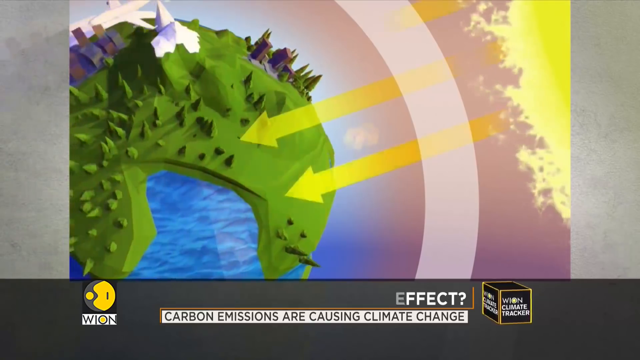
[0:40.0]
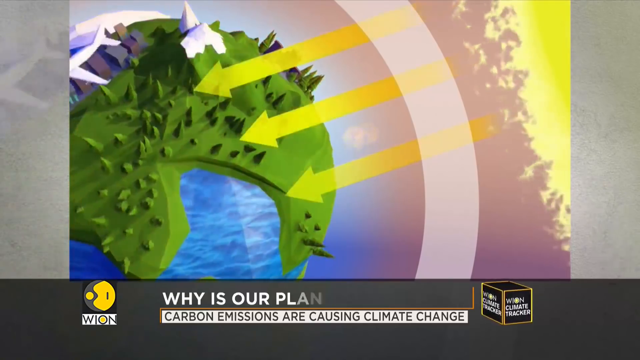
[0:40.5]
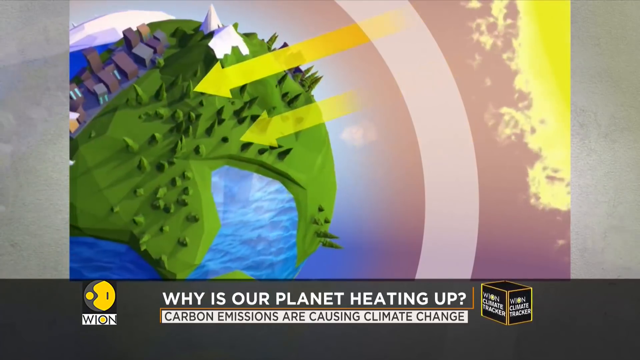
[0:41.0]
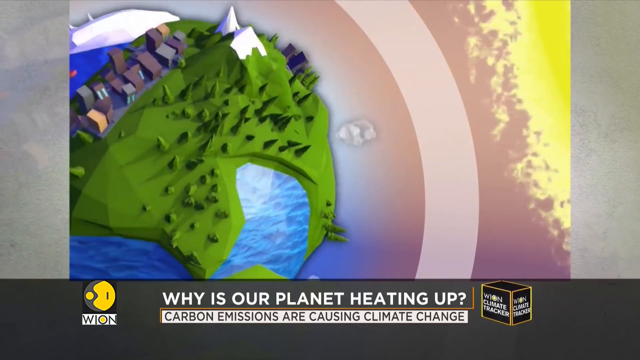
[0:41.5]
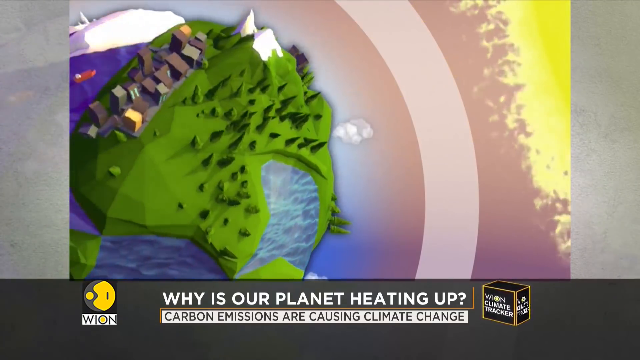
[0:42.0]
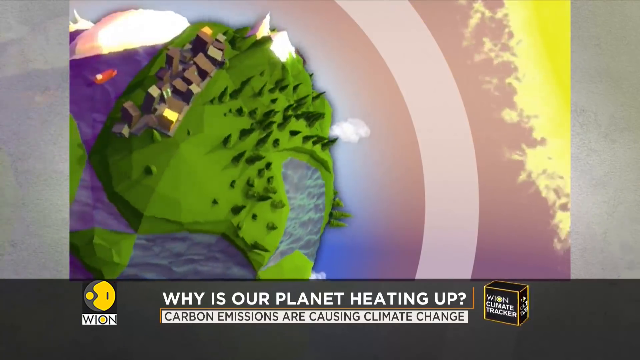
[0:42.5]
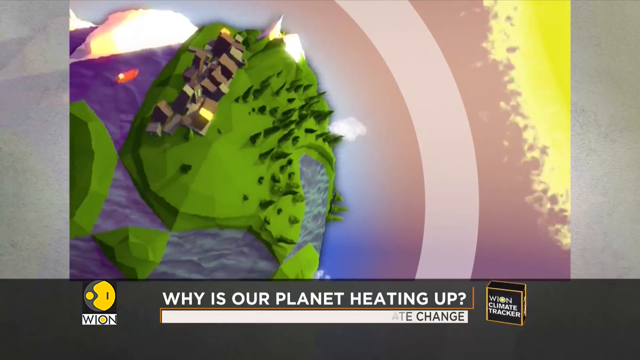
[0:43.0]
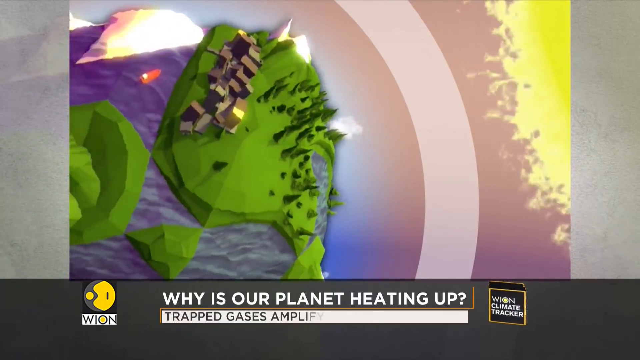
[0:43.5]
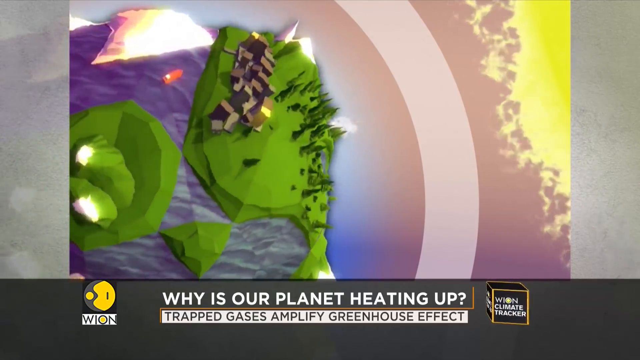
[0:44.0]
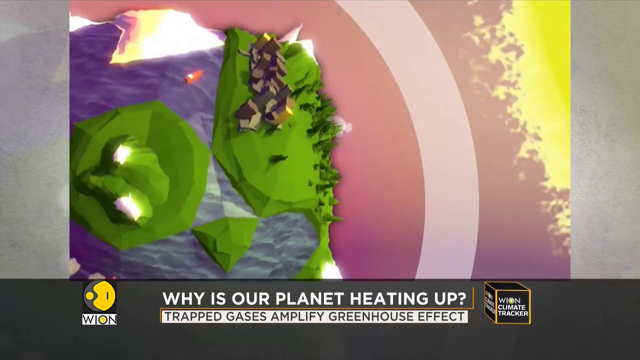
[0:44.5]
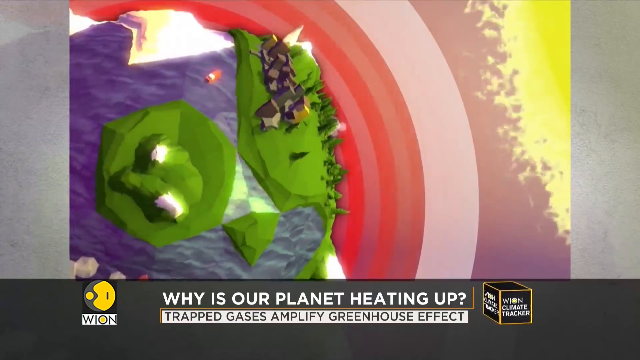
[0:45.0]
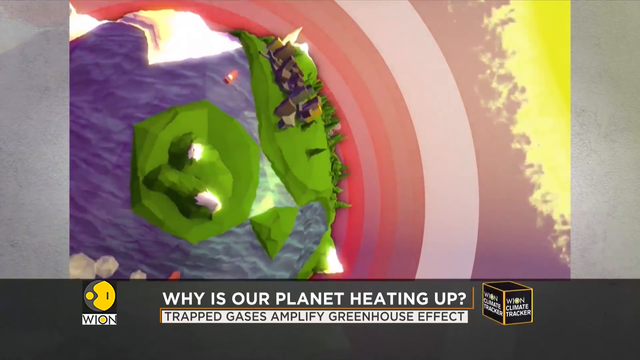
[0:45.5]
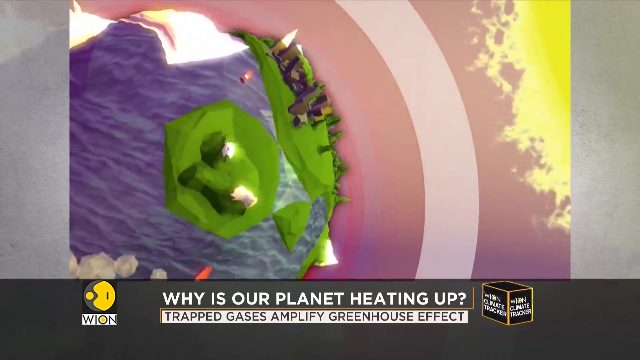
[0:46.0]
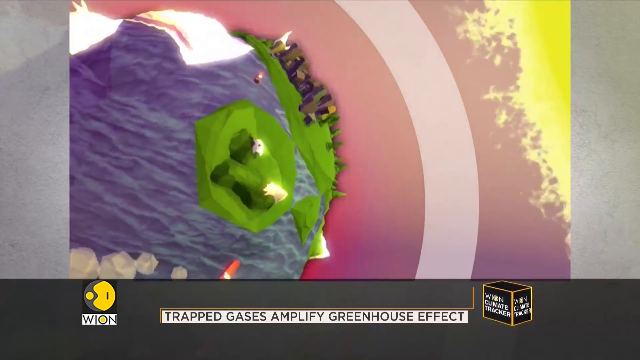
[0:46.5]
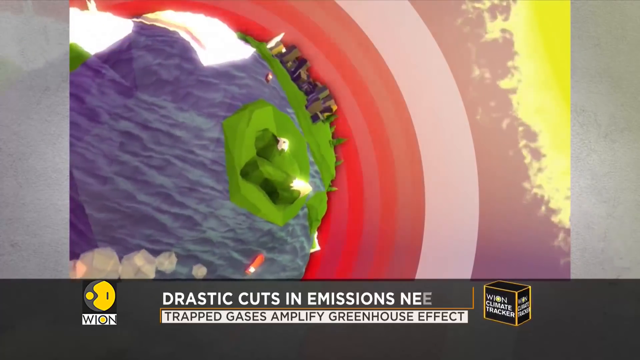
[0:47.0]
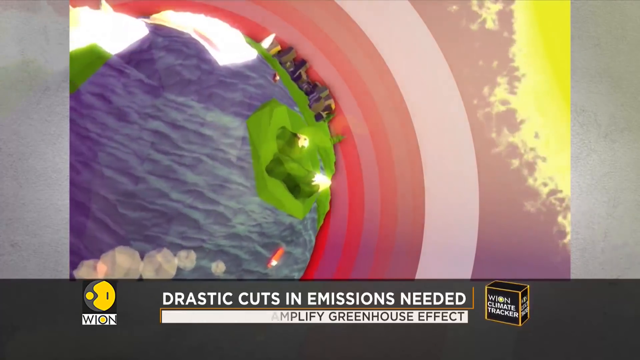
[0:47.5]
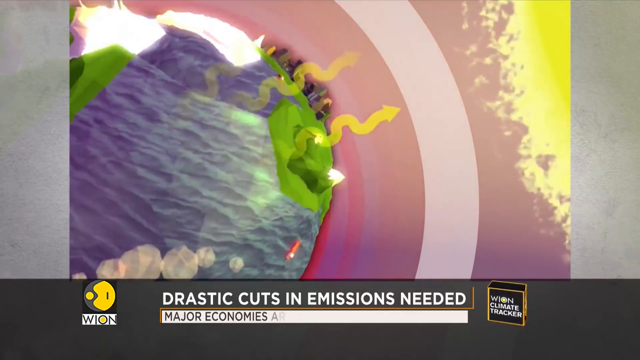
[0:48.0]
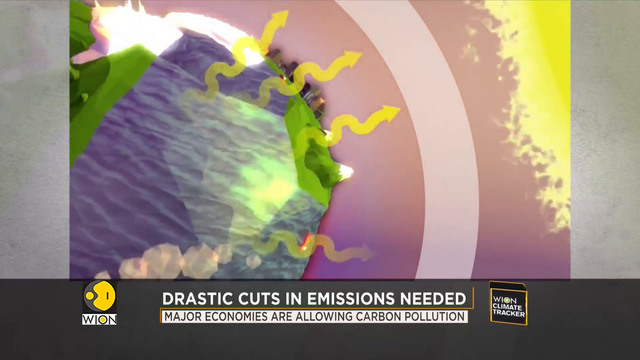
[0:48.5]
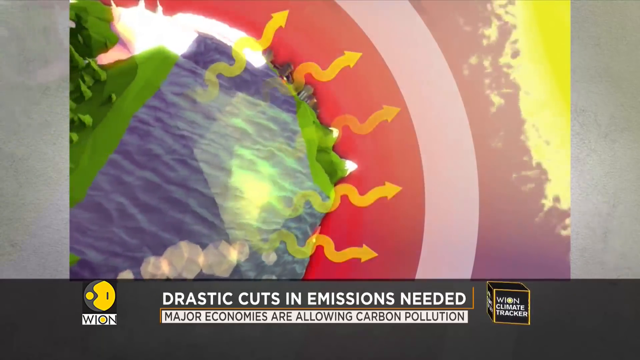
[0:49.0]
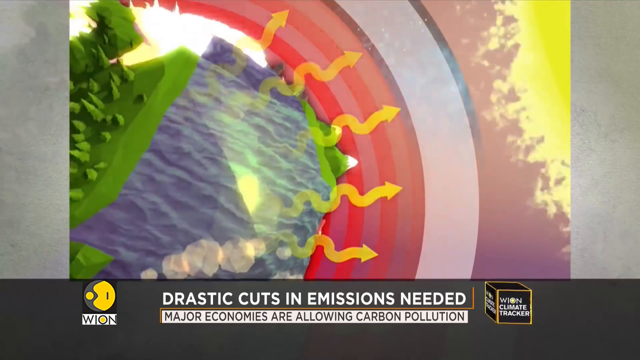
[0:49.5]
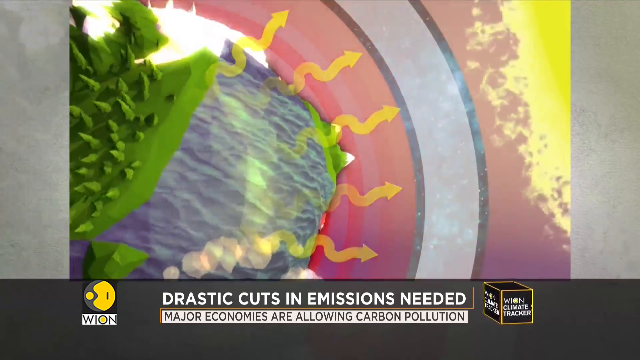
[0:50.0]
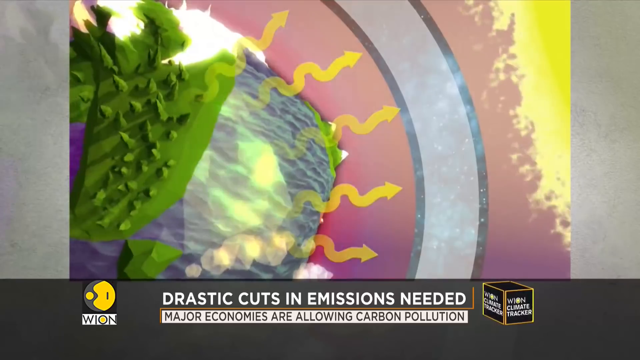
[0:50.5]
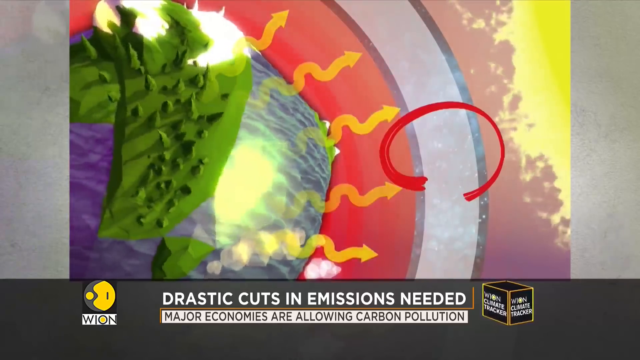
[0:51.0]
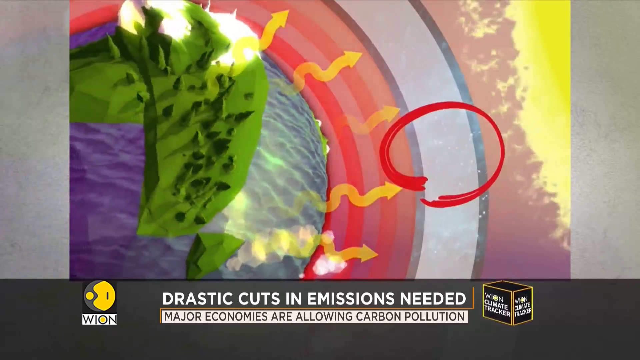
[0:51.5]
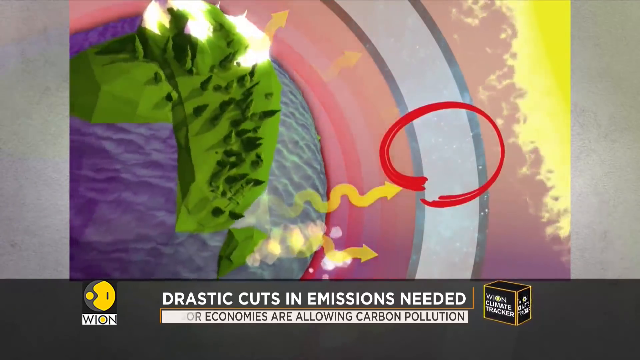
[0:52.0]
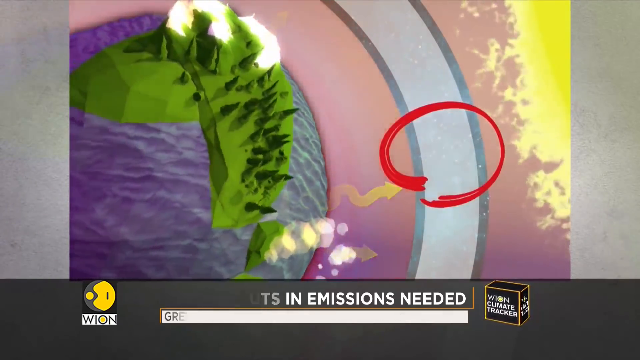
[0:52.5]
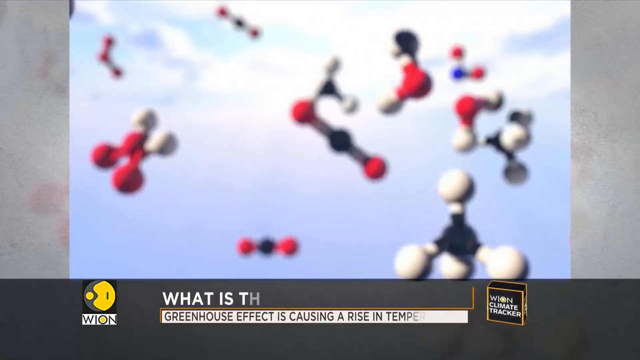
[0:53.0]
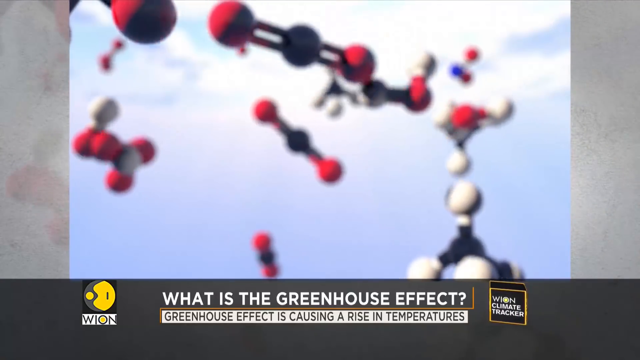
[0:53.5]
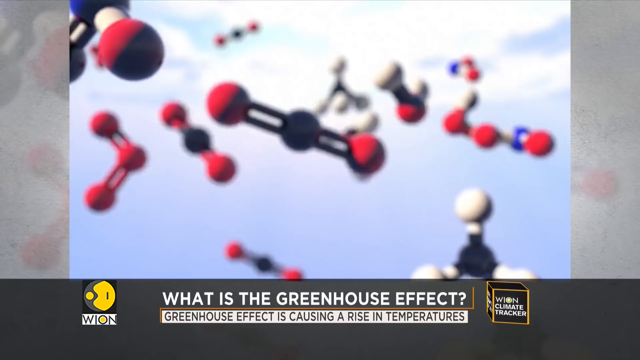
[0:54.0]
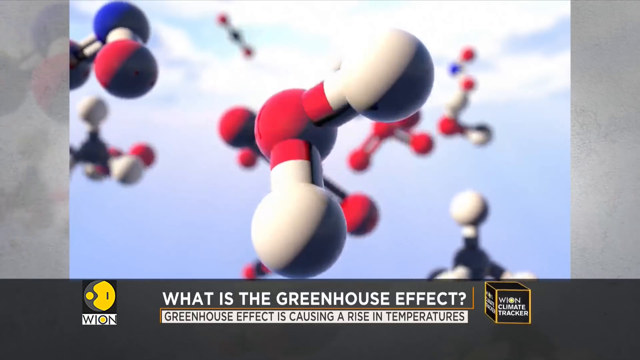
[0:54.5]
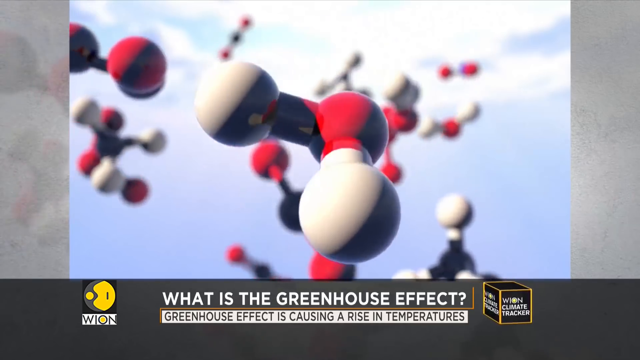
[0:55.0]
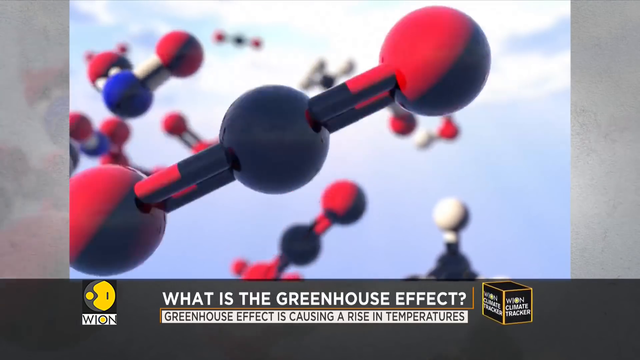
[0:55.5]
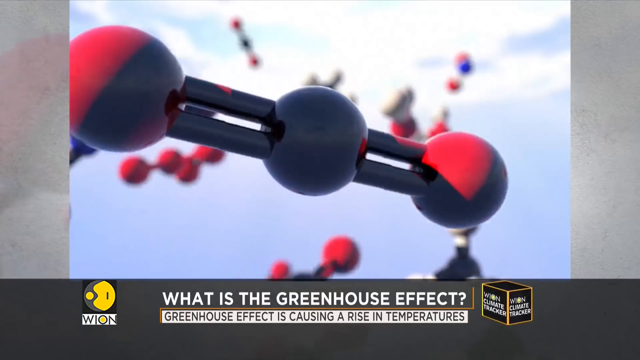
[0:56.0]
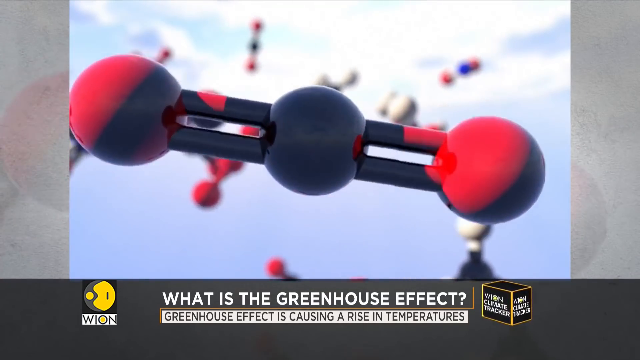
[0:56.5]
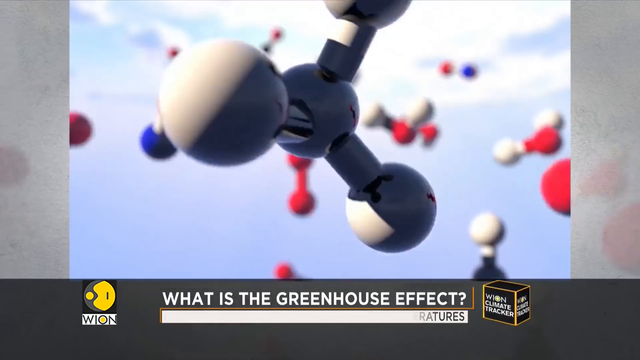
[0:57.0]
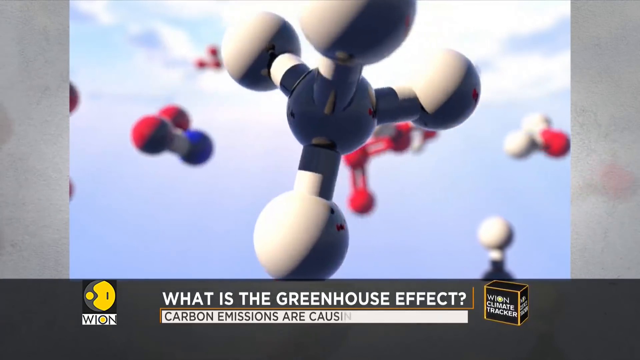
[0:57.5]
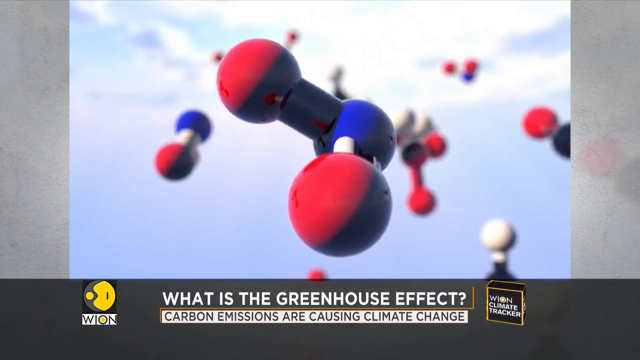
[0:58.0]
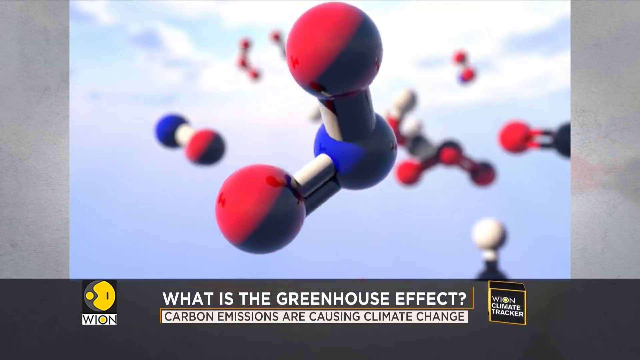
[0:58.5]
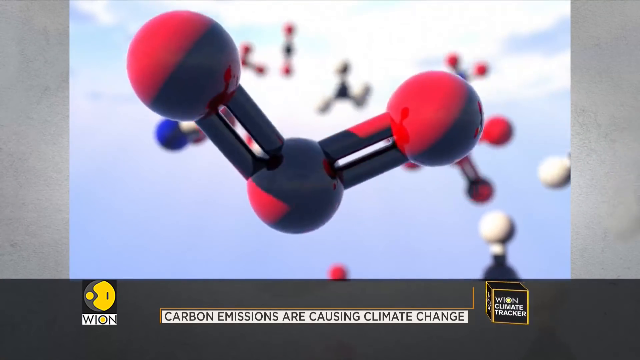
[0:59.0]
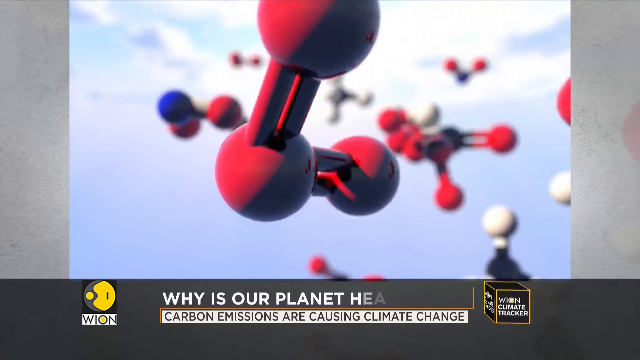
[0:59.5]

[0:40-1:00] The news report about the greenhouse effect shows graphics of what appear to be molecules on the screen. It then shows the sun heating up the Earth, with greenhouse gases causing global warming.